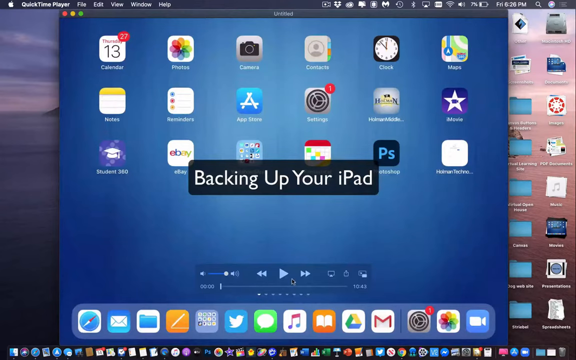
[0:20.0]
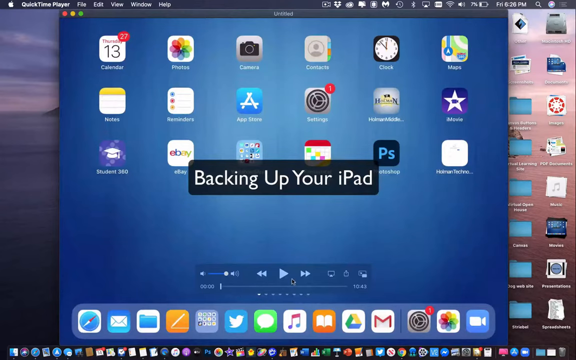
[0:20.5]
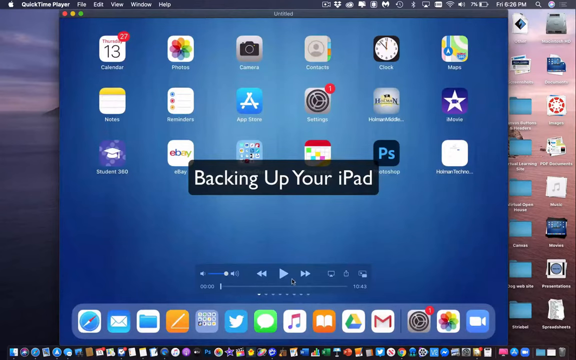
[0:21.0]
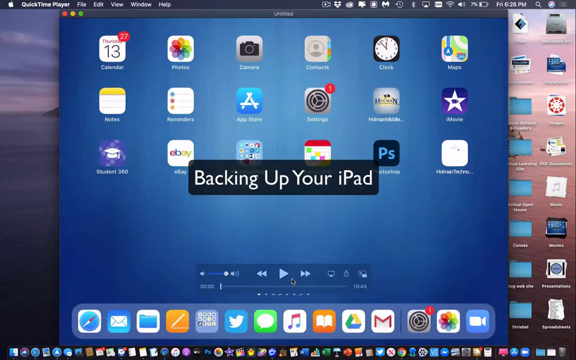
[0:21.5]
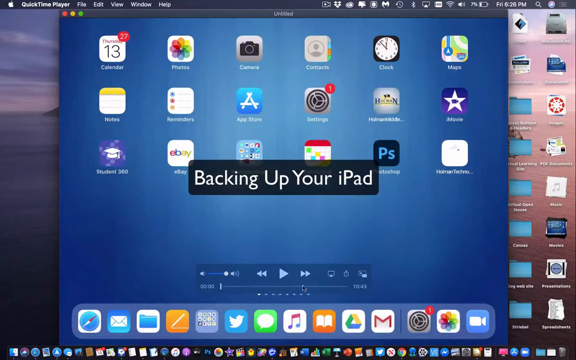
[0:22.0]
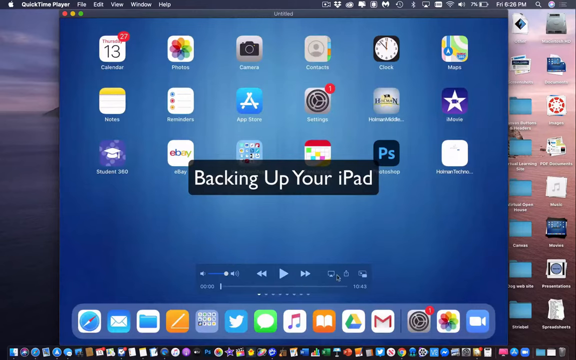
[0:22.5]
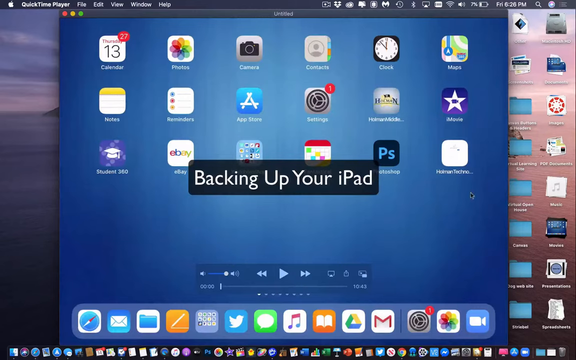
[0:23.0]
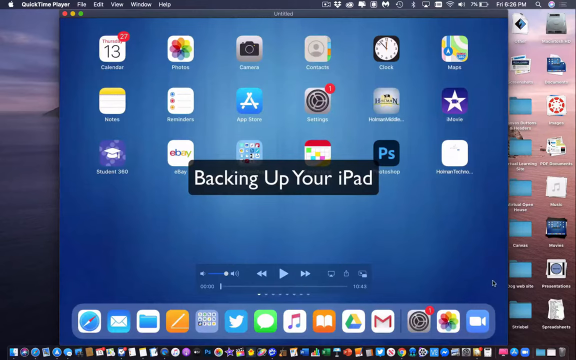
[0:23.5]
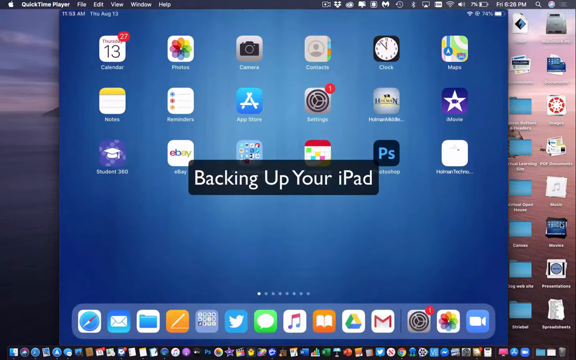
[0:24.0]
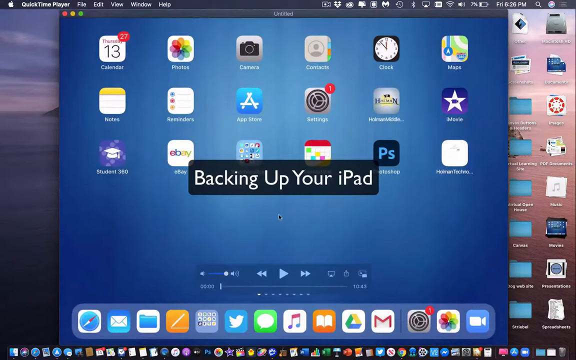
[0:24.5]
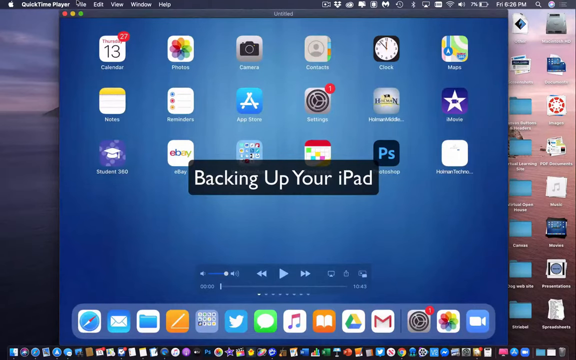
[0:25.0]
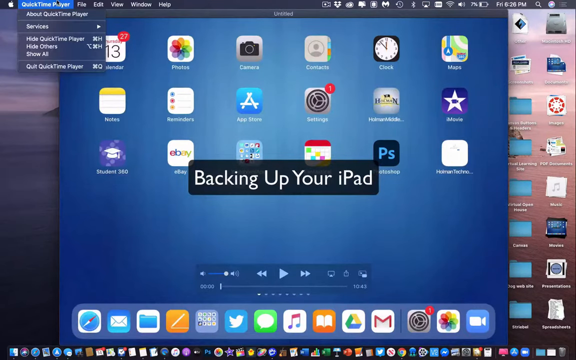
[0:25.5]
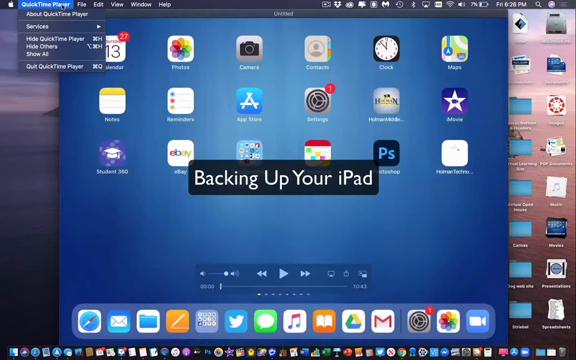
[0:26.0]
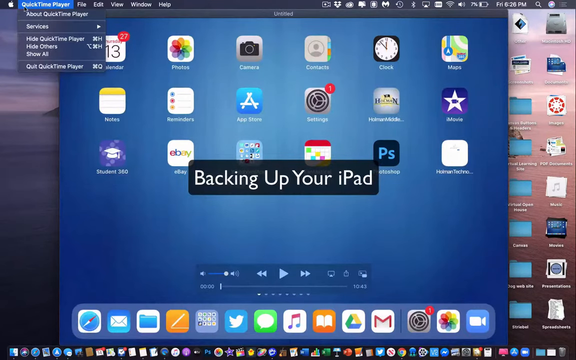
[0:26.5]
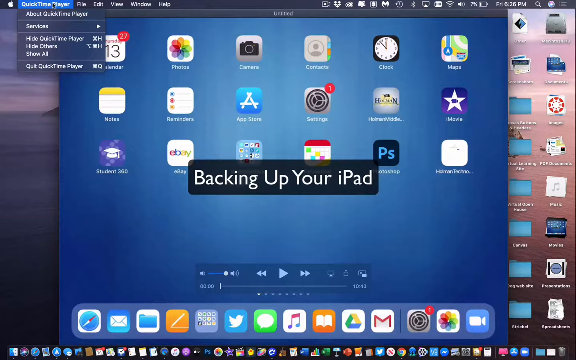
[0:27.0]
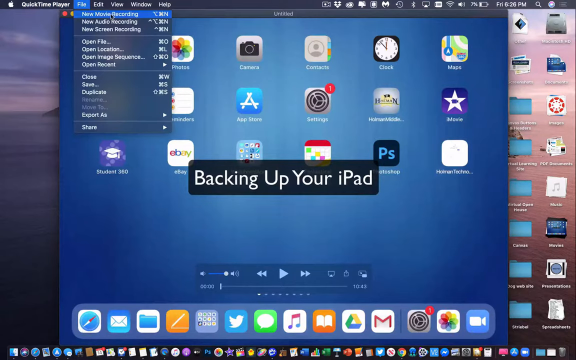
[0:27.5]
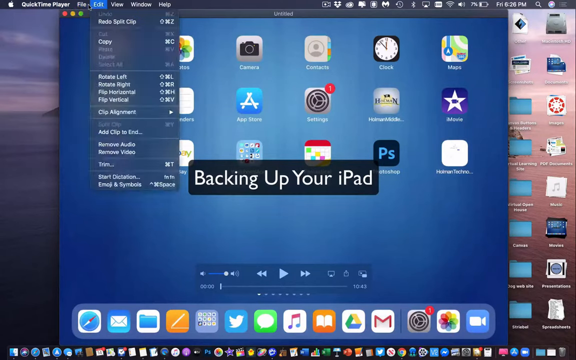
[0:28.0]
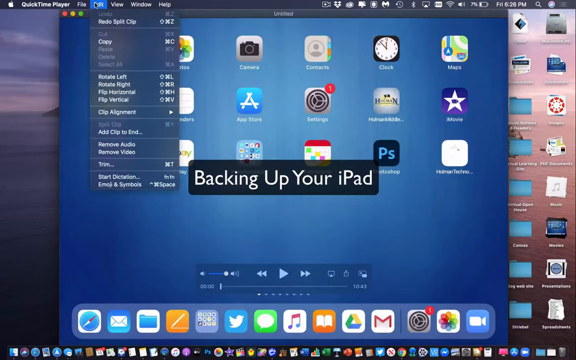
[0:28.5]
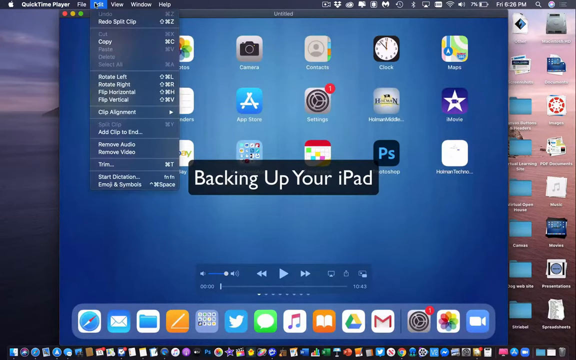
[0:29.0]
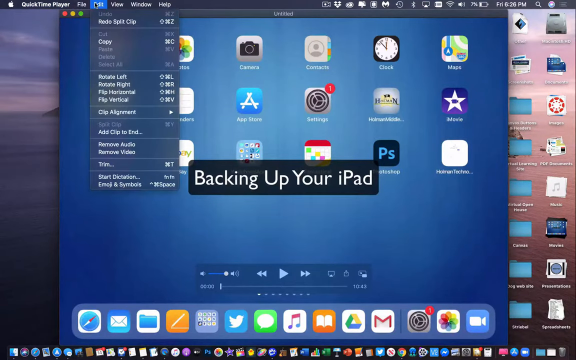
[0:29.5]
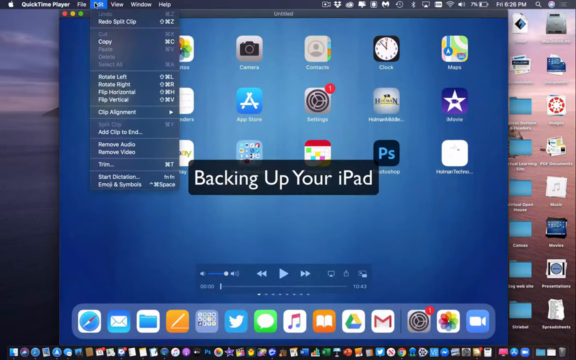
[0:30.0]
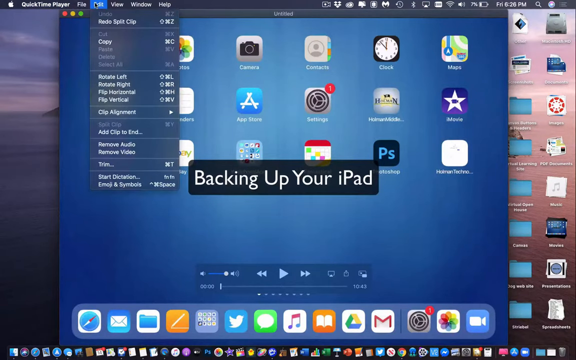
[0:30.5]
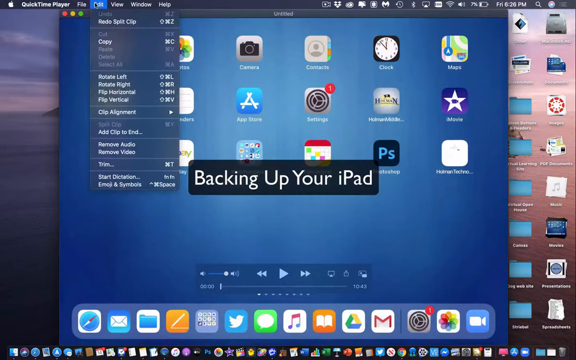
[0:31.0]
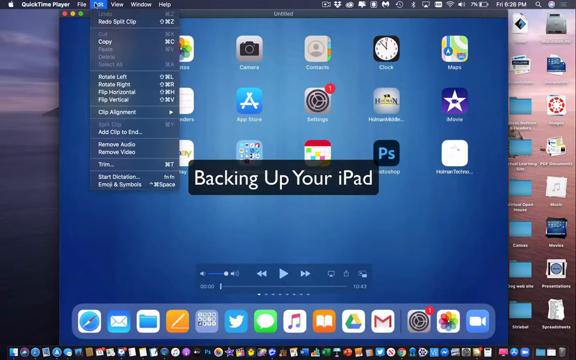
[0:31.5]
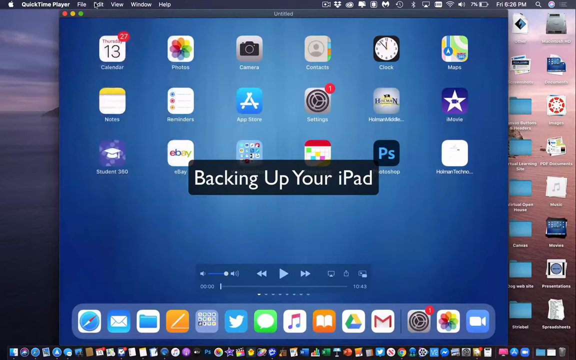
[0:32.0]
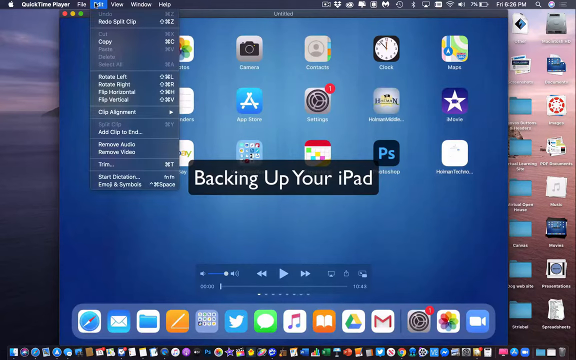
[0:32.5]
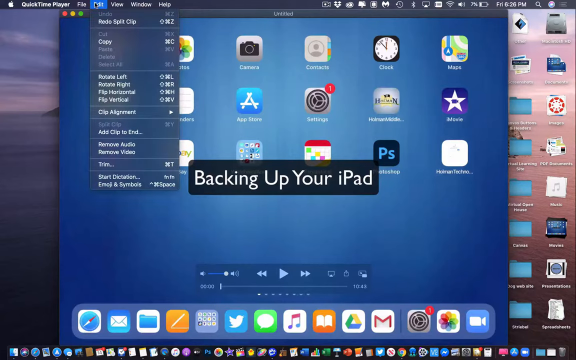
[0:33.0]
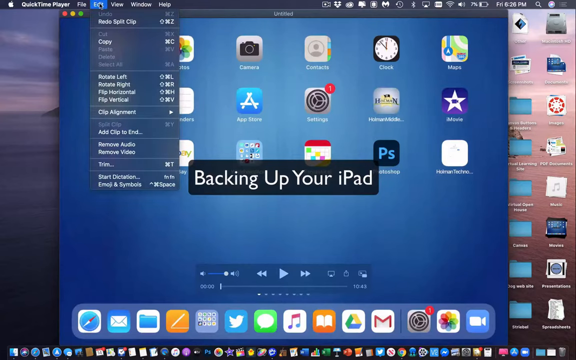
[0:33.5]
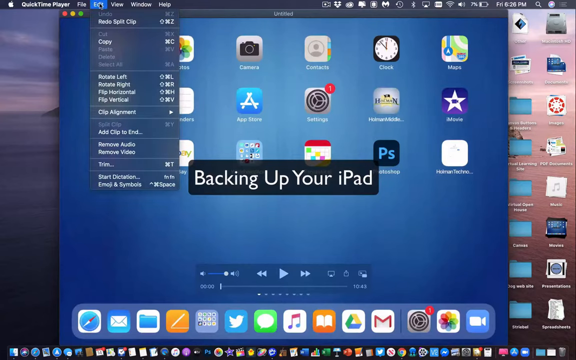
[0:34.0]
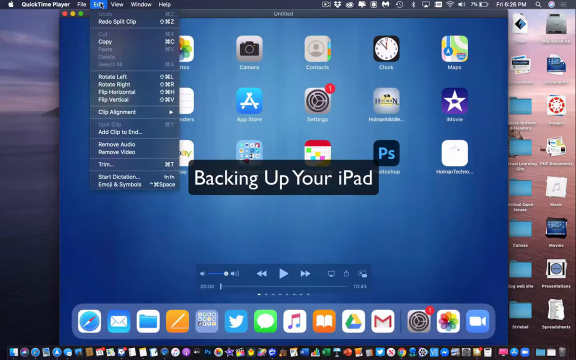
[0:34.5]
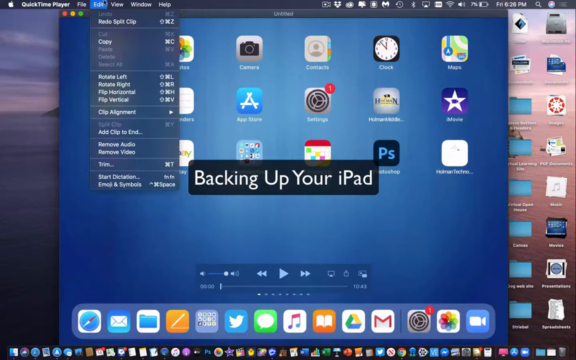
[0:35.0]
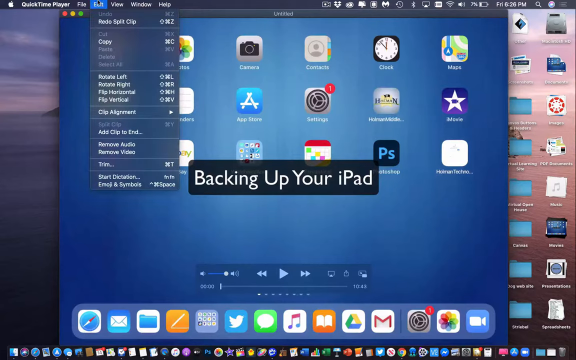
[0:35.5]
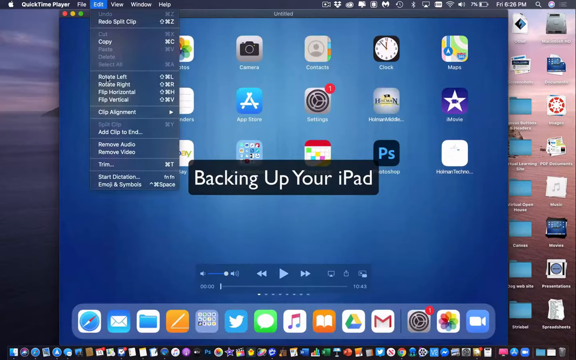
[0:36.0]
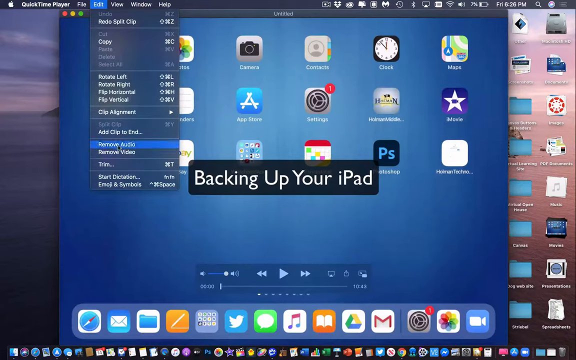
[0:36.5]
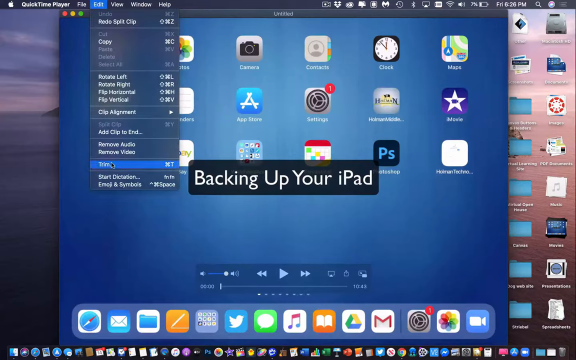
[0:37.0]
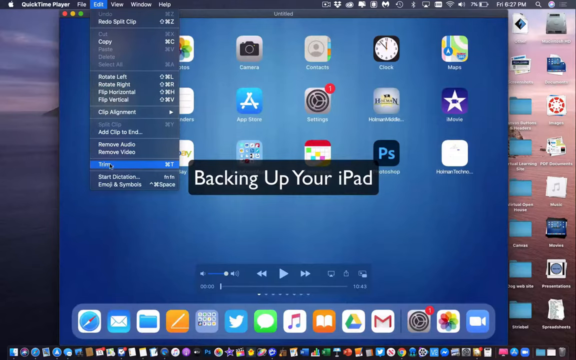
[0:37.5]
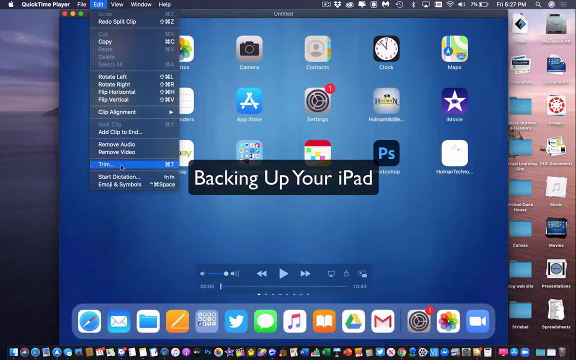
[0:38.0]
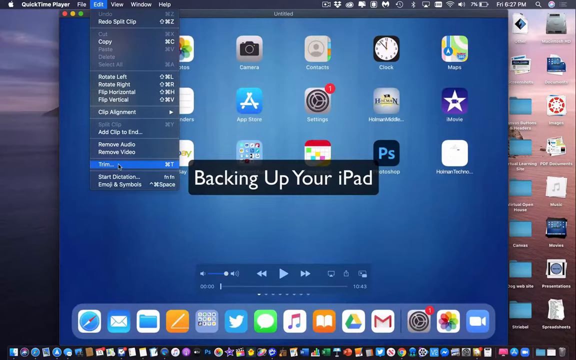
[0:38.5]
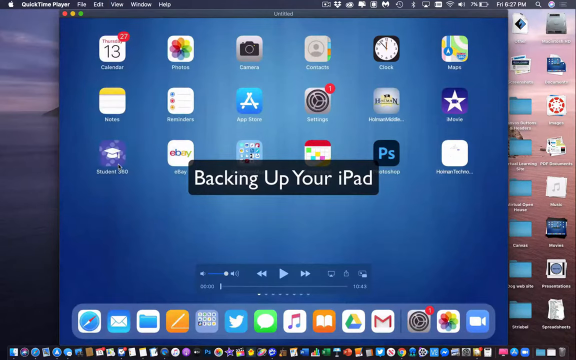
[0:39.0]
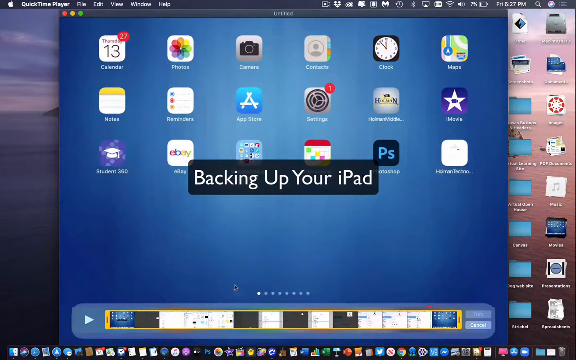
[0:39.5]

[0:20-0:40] The home screen of an iPad is shown; it looks like an Apple iPad. At the center of the screen it says "backing up your iPad," and in the upper left corner it says "QuickTime Player," so this is apparently a video being played in QuickTime Player. A play bar at the bottom center of the screen has Play, Rewind and Fast Forward buttons. Across the bottom is a bunch of icons, like social media and messaging icons, and on the right side is a bunch of folders. The operating system looks to be Apple, so this is probably being done on either an Apple iPad or some type of Apple laptop. Many symbols and signs run across the very top, and the date and time are in the upper right corner. A large blue window is open in the center with lots of different apps and settings. The mouse cursor goes up to the left corner where it says QuickTime Player, then moves a few menus over to the right to Edit and highlights it. It moves back and forth, then goes down to Trim in the drop-down menu, and something appears at the very bottom that allows trimming.